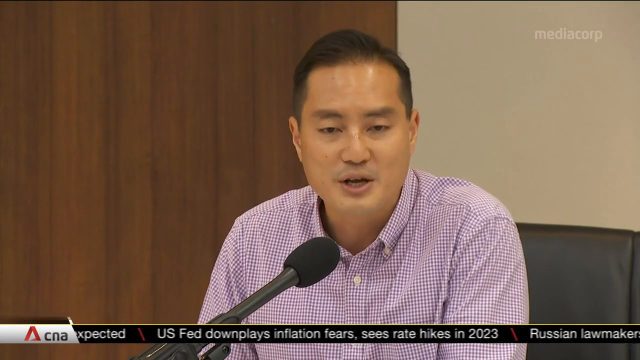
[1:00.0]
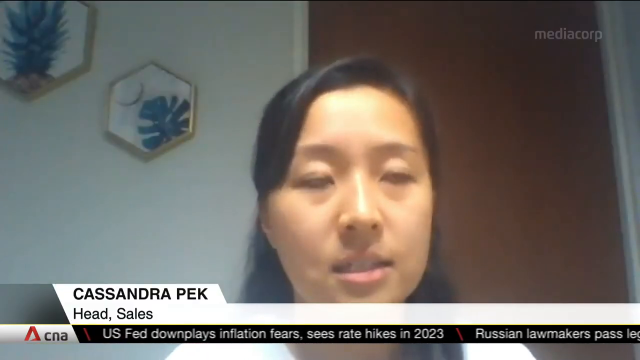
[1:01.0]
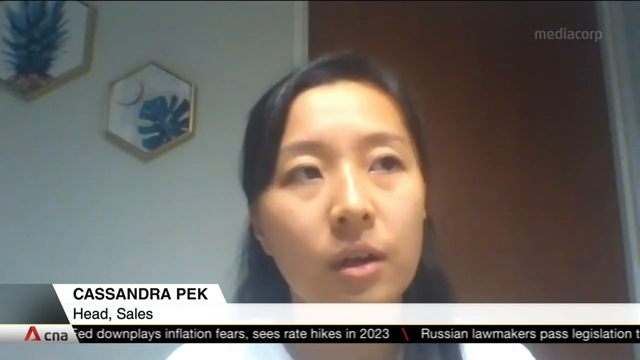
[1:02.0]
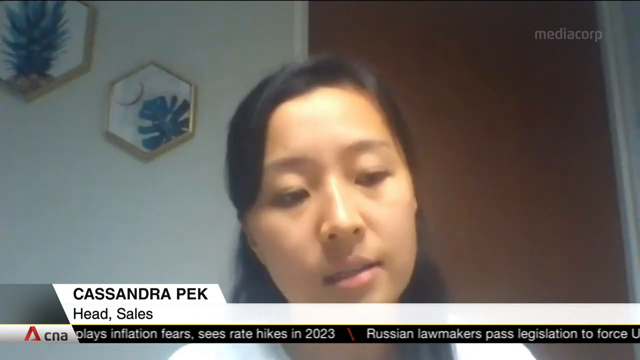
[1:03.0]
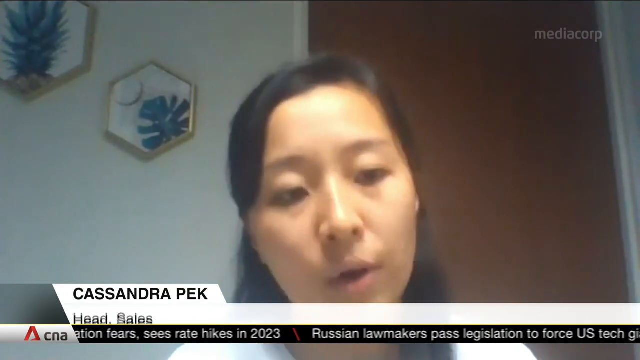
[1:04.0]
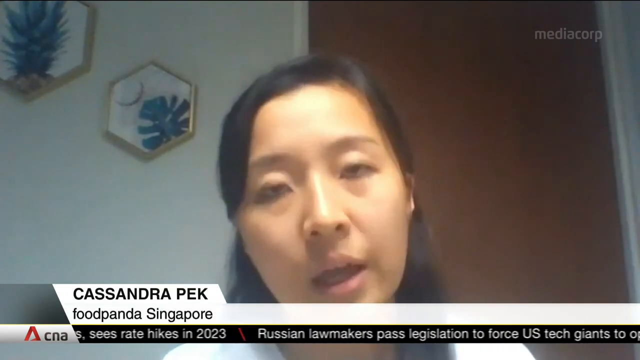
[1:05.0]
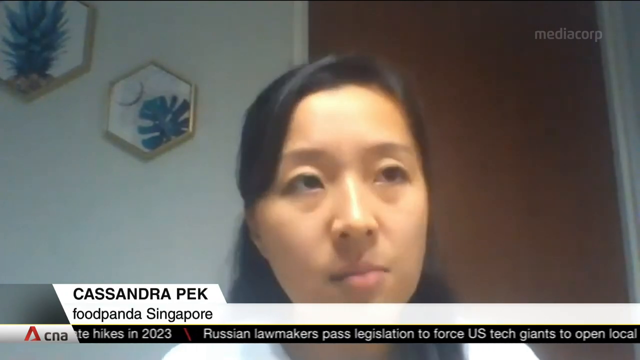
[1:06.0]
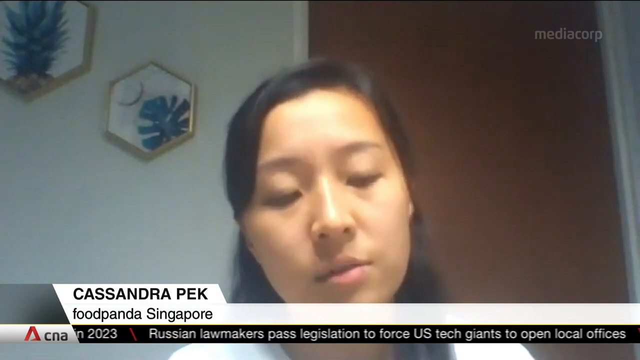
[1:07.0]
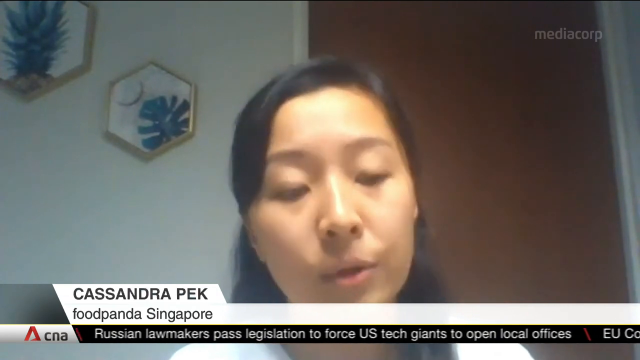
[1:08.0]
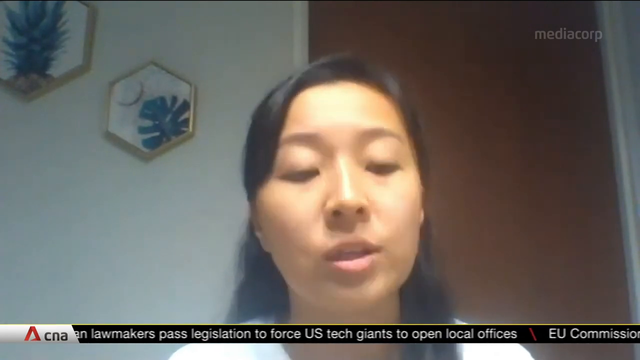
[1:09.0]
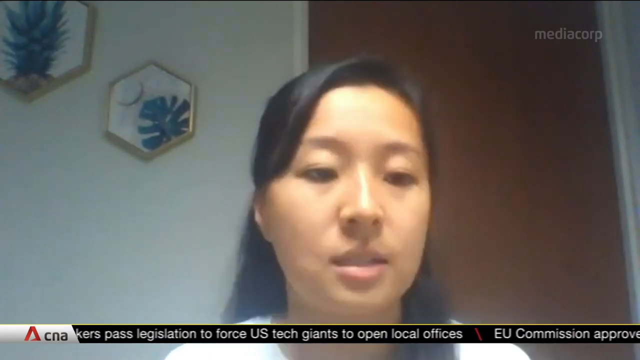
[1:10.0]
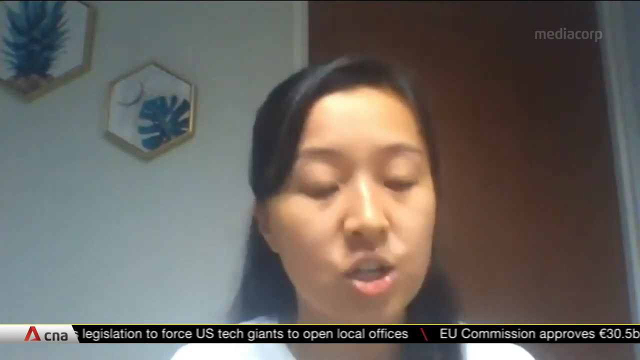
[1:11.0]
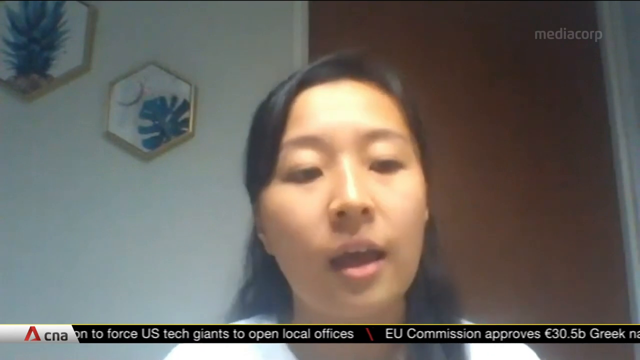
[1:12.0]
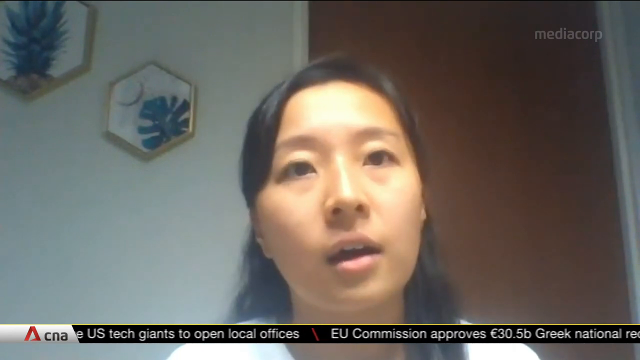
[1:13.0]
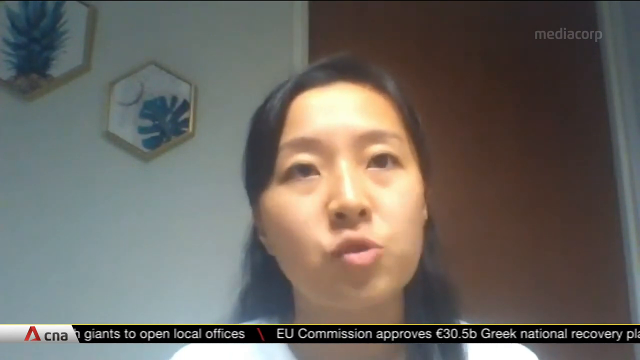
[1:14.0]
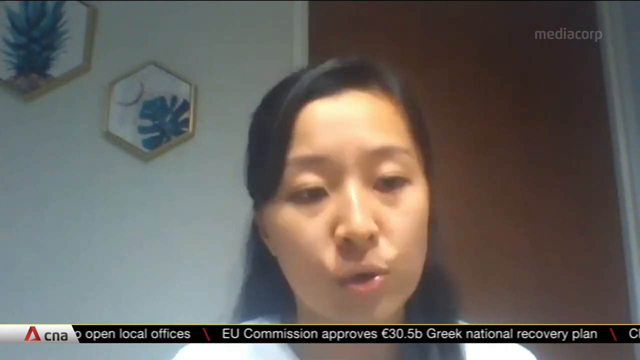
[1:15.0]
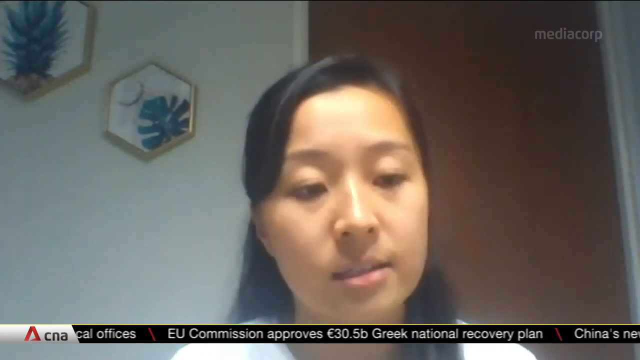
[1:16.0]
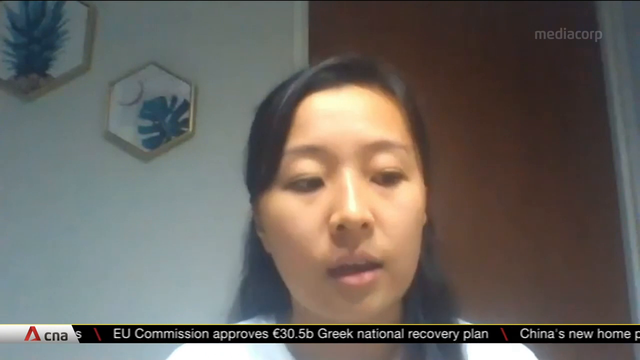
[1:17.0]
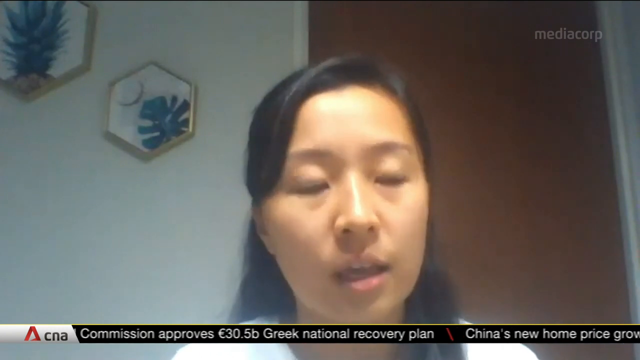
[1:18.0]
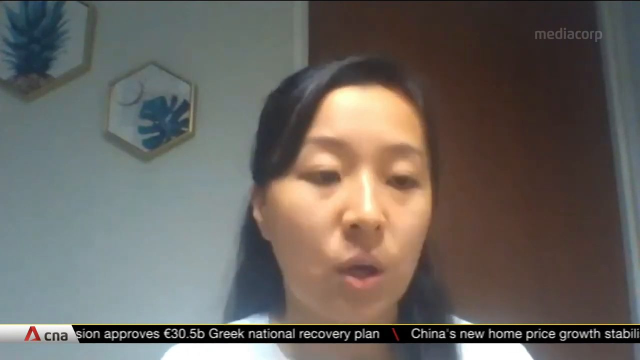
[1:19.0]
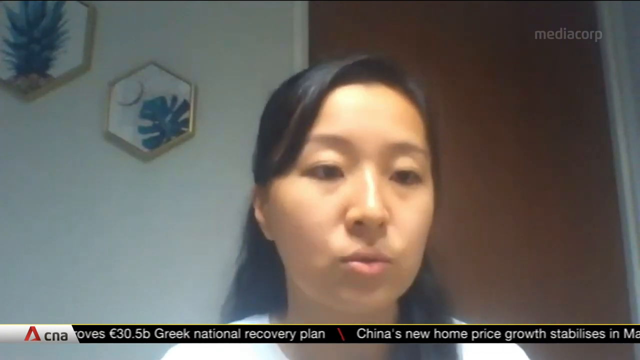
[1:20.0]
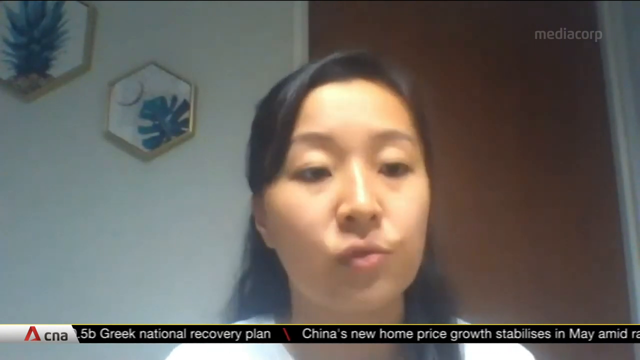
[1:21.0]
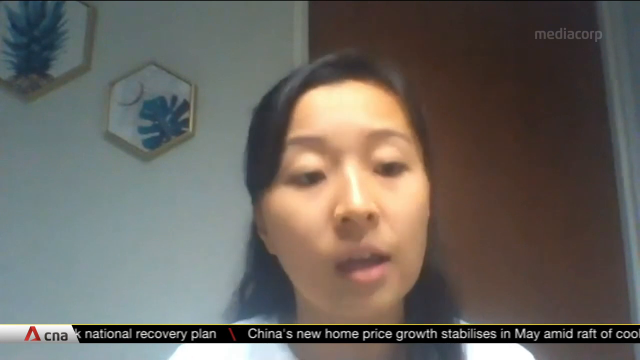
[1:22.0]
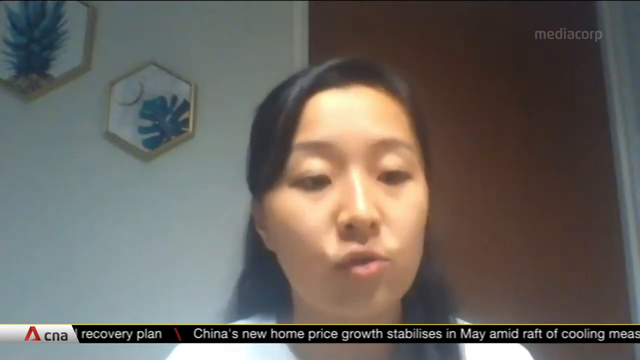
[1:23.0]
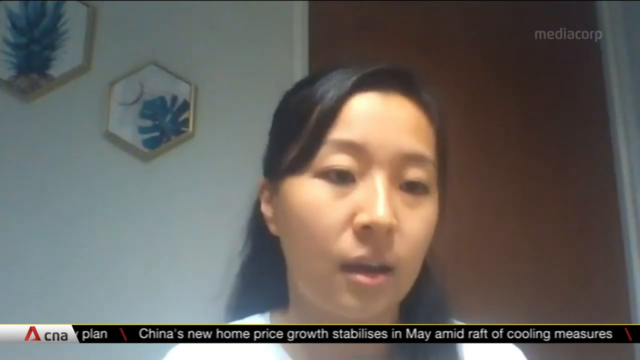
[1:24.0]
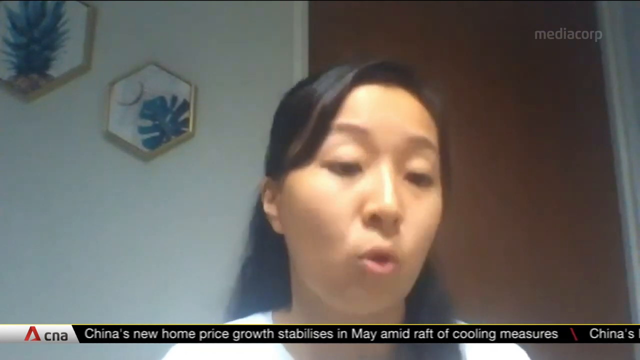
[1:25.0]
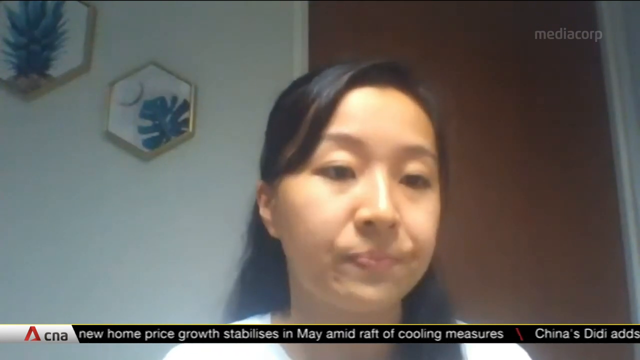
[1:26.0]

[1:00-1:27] A woman, the head of sales at Foodpanda Singapore, is being interviewed and talks.